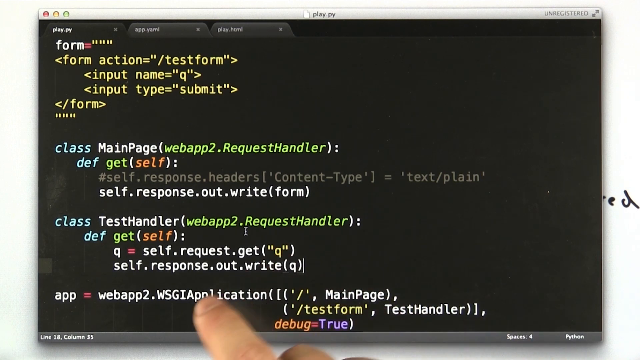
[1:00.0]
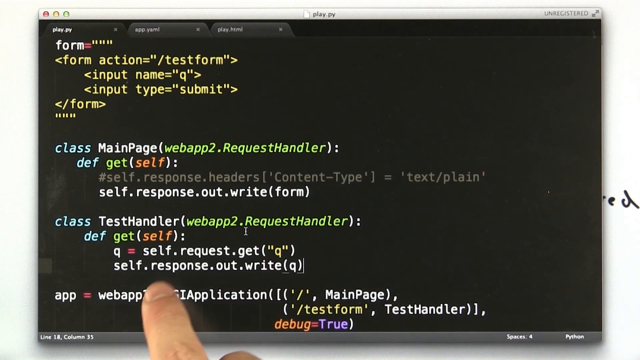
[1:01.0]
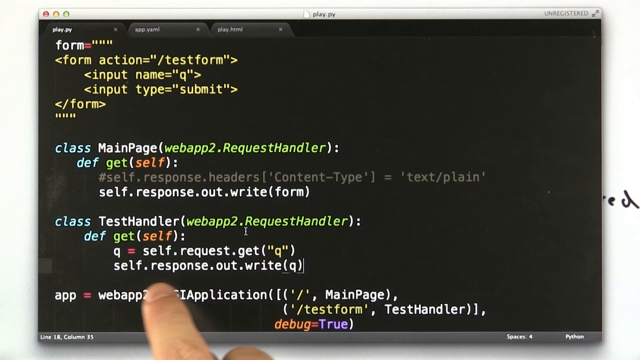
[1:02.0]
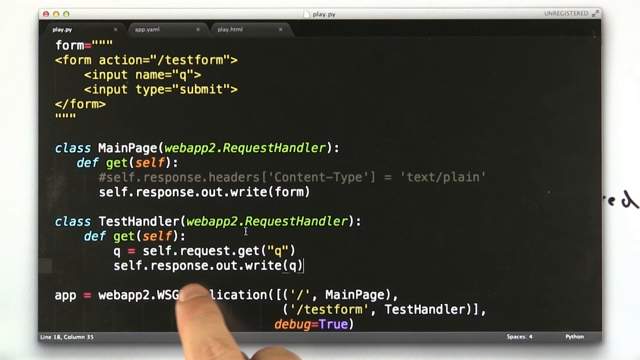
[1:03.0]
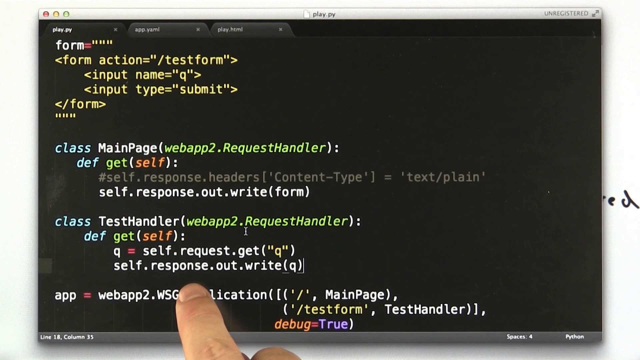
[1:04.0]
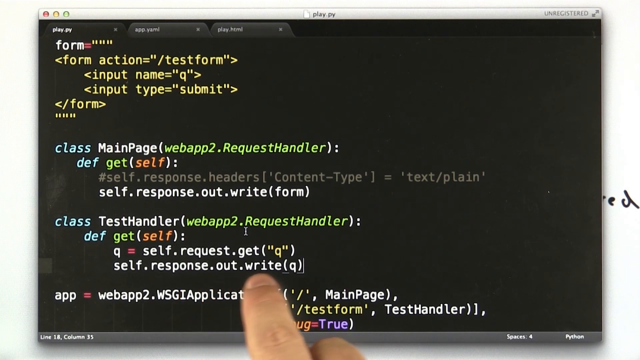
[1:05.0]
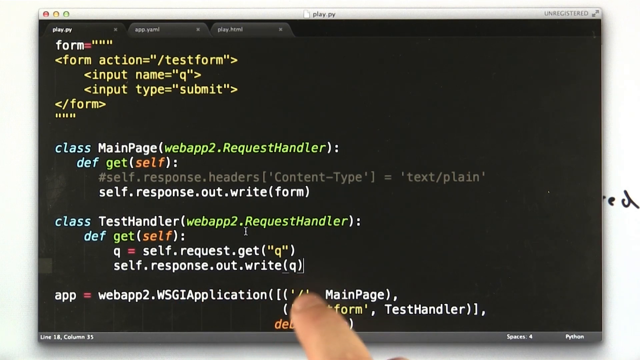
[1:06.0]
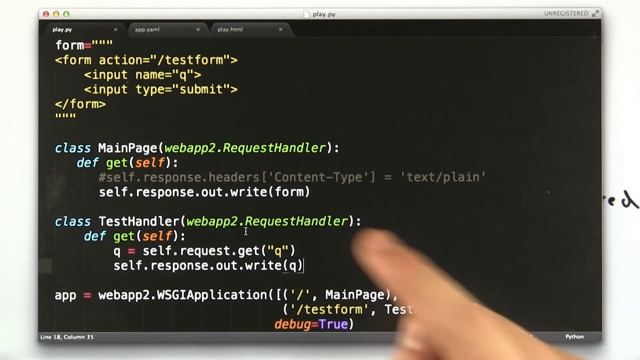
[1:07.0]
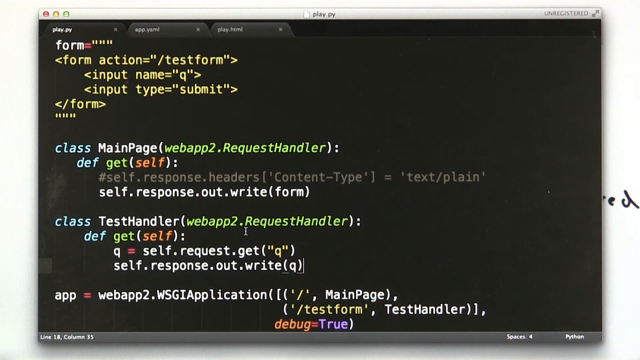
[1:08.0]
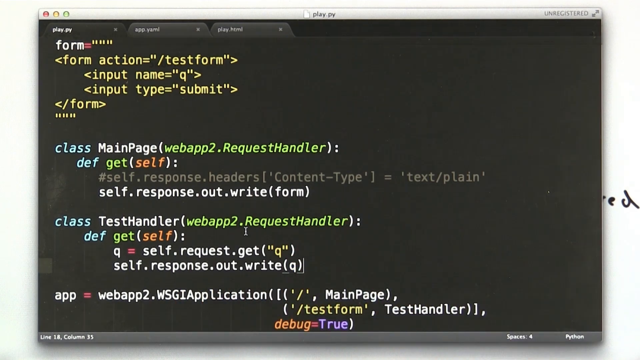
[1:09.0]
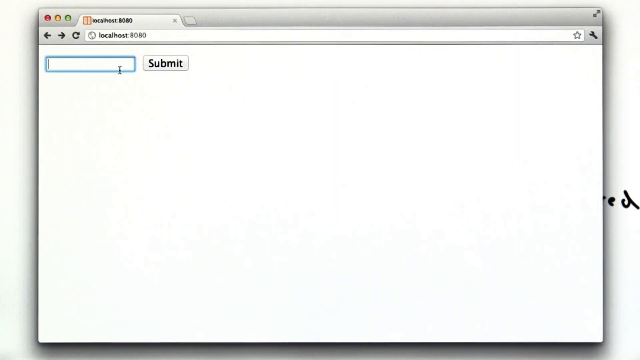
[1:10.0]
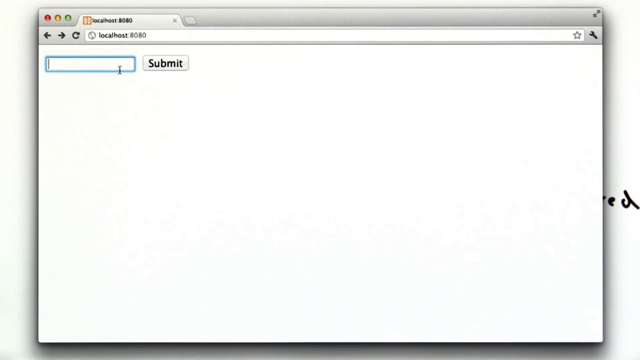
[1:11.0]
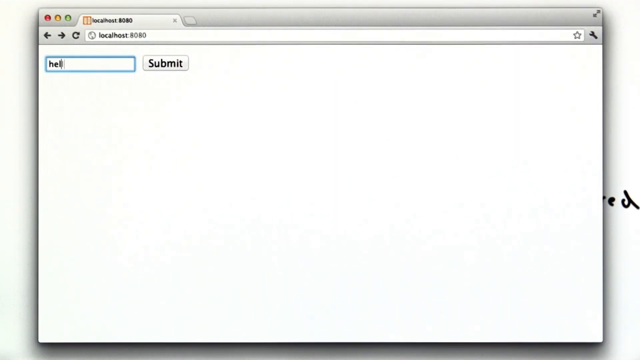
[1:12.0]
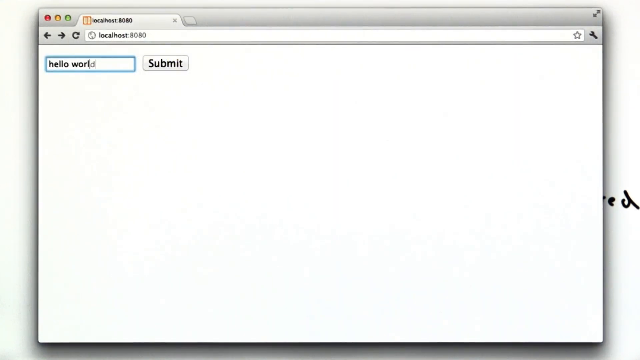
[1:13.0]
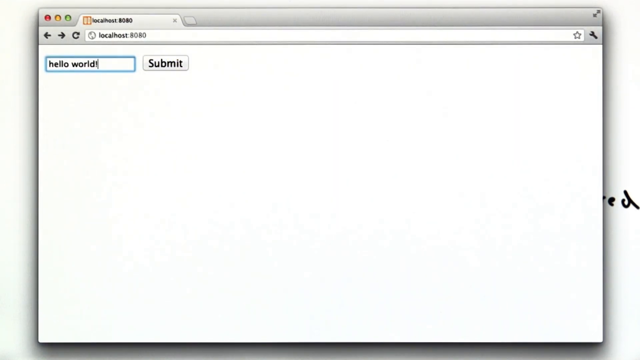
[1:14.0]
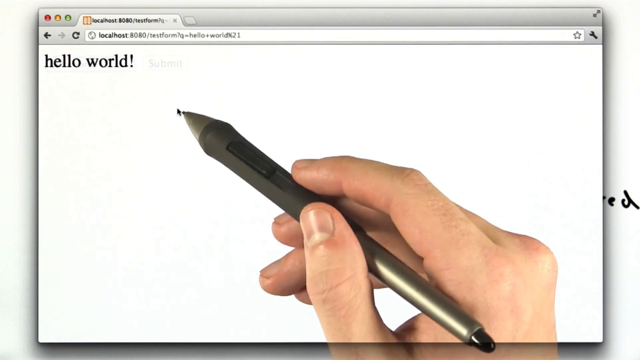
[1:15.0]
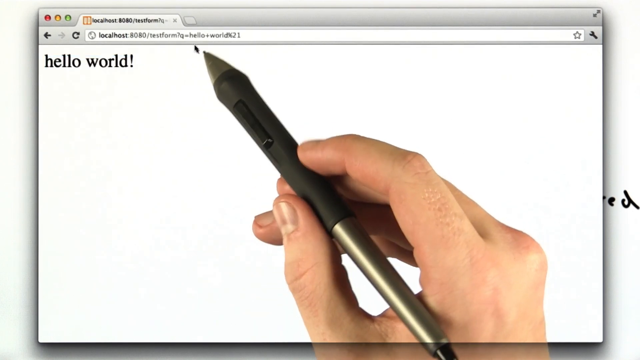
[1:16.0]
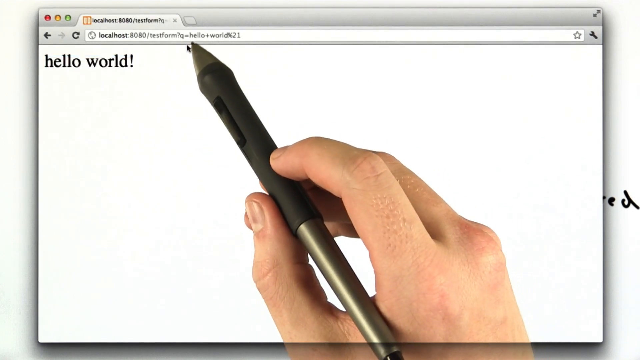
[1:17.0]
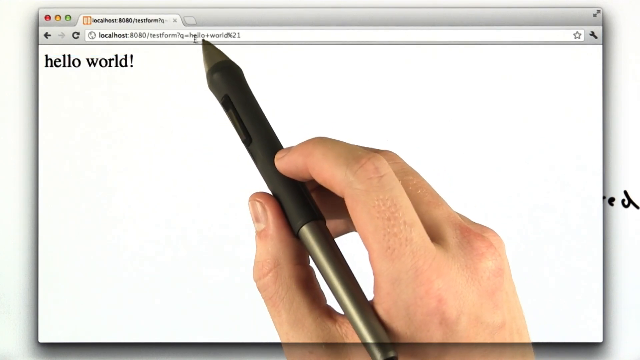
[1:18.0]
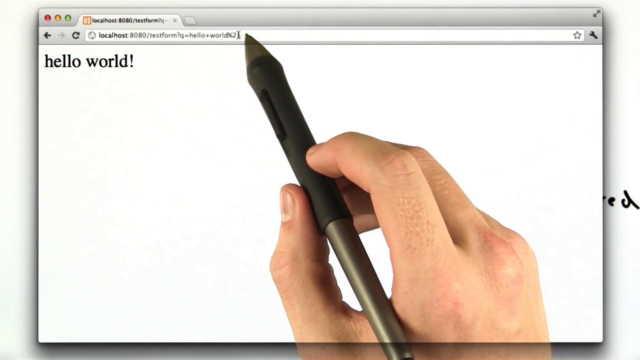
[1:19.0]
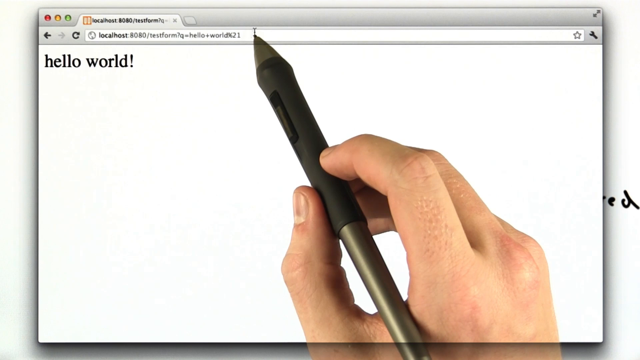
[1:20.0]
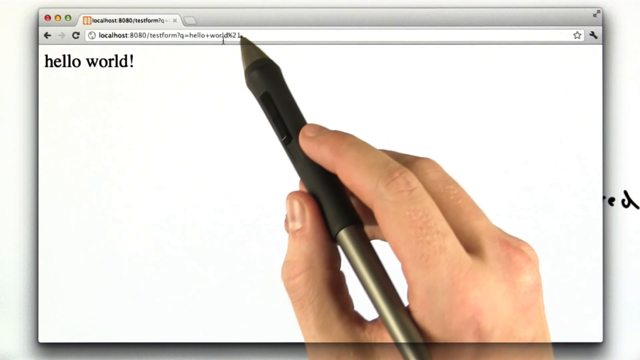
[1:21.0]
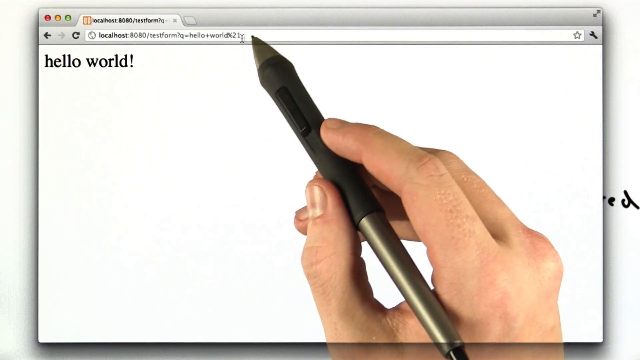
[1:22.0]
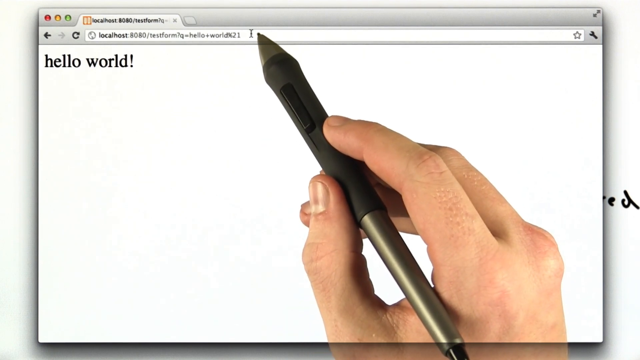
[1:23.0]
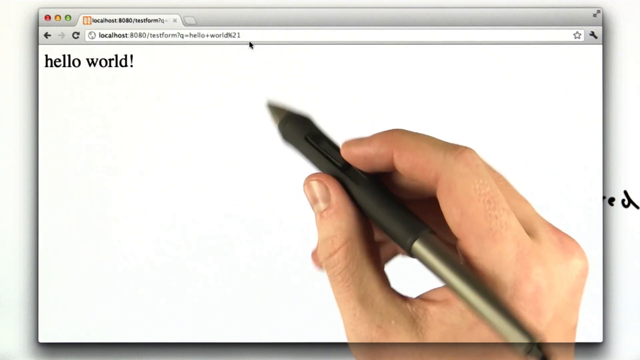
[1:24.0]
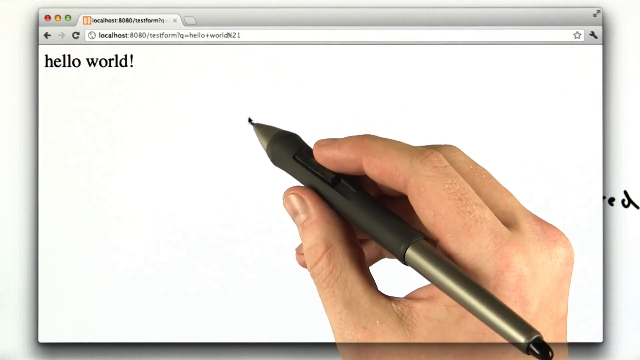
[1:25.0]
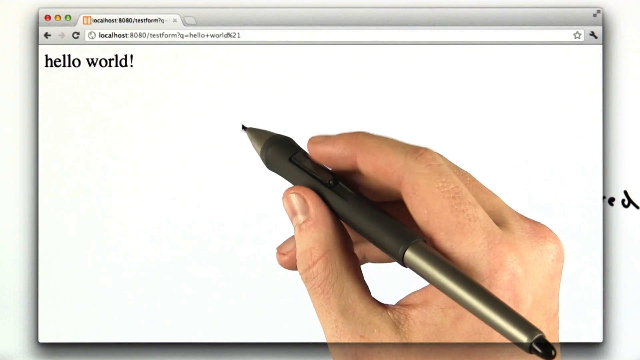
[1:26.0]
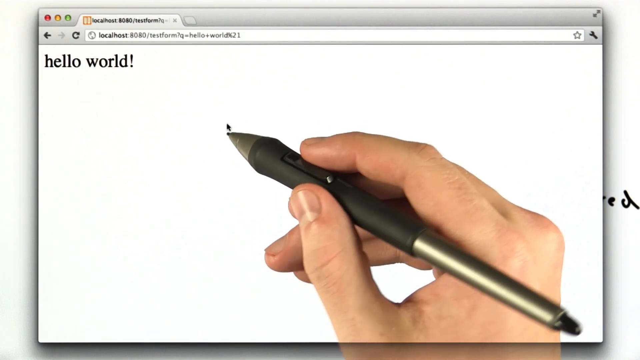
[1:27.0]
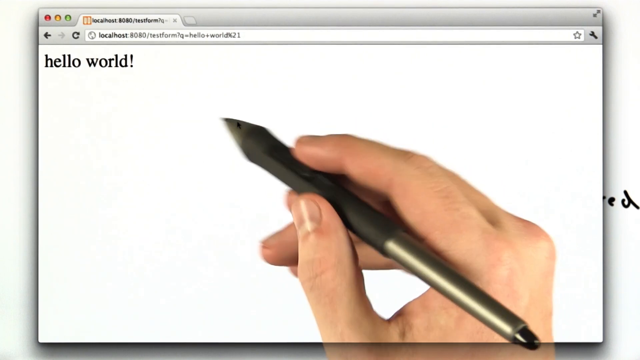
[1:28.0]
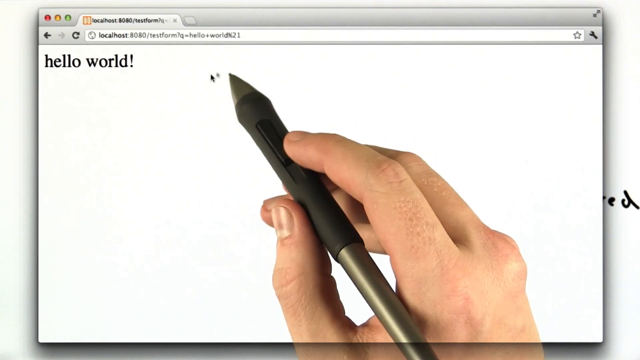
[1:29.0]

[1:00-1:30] The white banner at the top has a red circle, a yellow circle and a green circle, the document name play.py, and a note that the software is currently unregistered. Below are a few tabs: play.py is open, with two other tabs to its right. The code is in a black software window and shows various colors such as red, yellow, orange and green, with purple at the very bottom for "true". The developer points at various things in the code and then moves his hand away. He then opens the app he built, which shows a text box and a button for submitting. He types "hello world", submits it, and another web page shows the input "hello world".